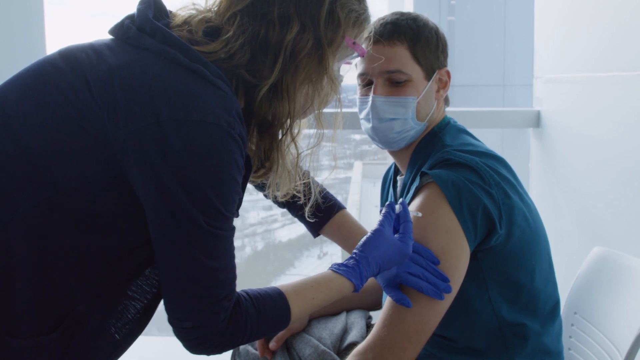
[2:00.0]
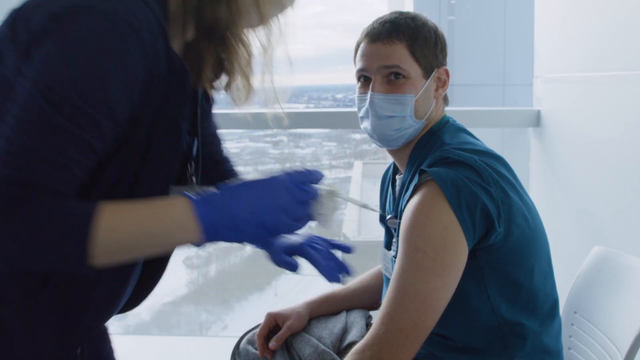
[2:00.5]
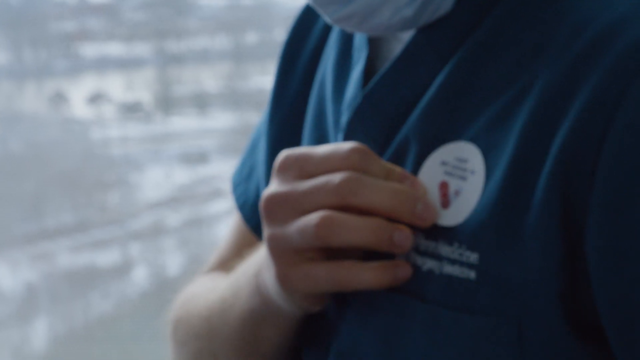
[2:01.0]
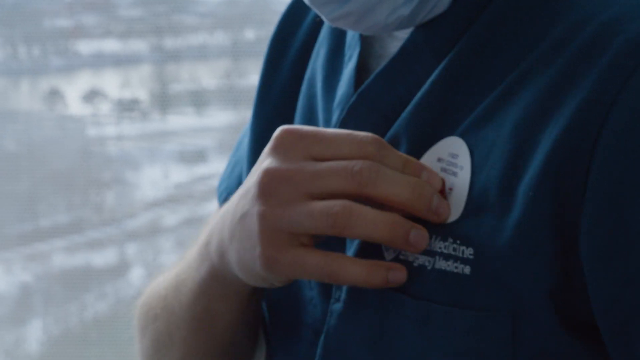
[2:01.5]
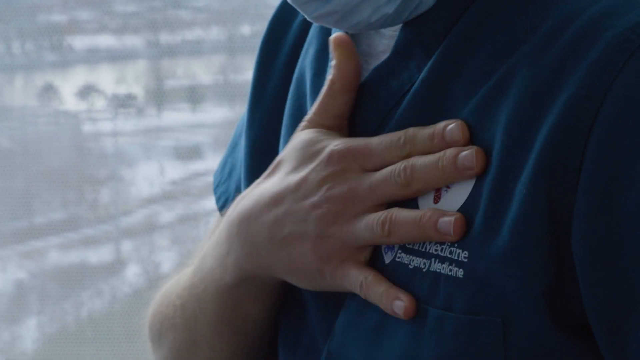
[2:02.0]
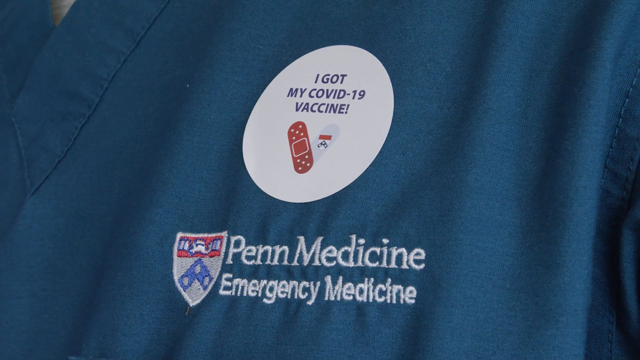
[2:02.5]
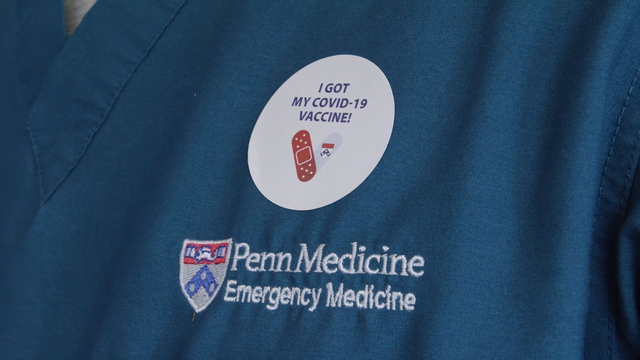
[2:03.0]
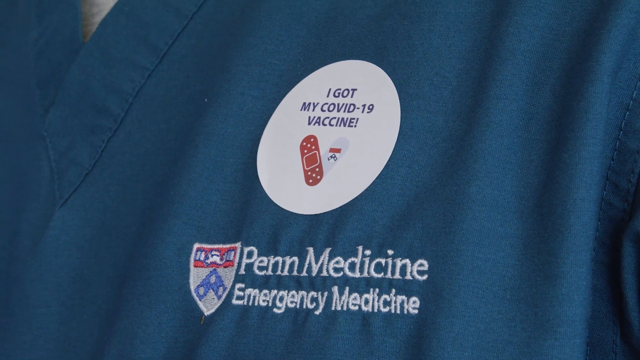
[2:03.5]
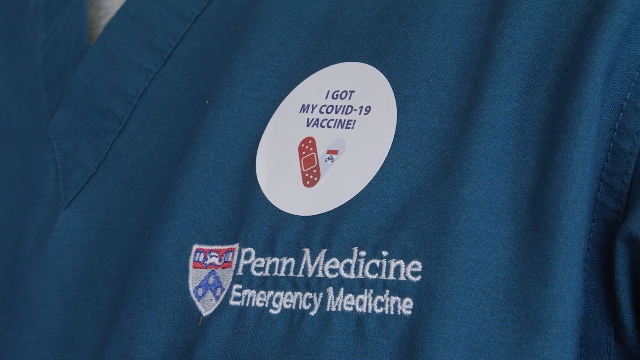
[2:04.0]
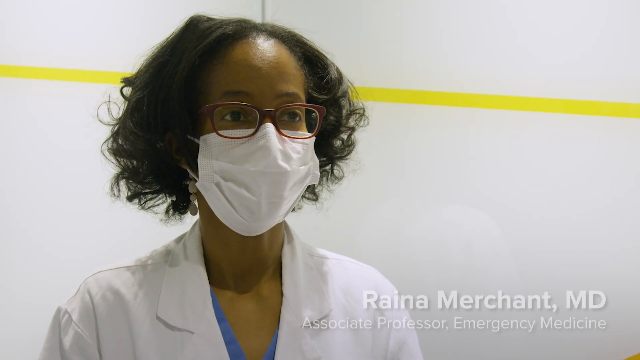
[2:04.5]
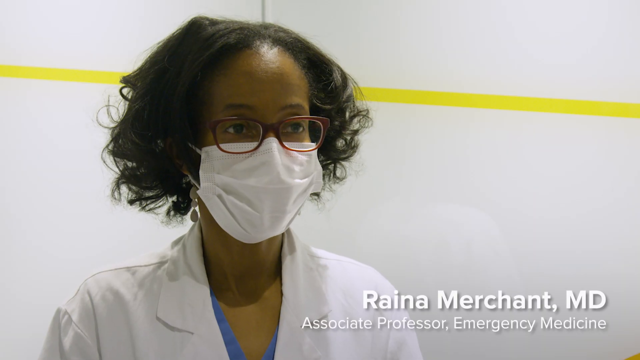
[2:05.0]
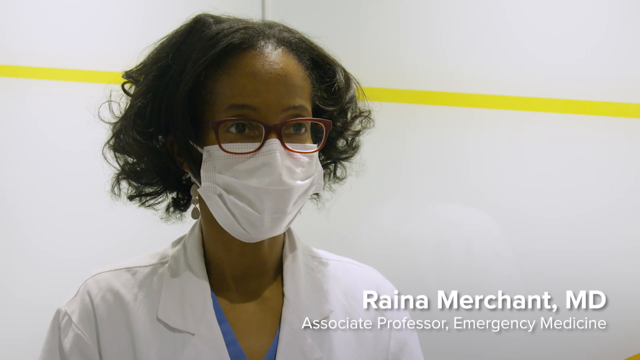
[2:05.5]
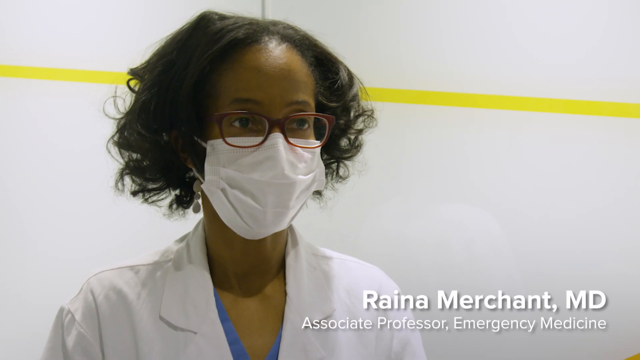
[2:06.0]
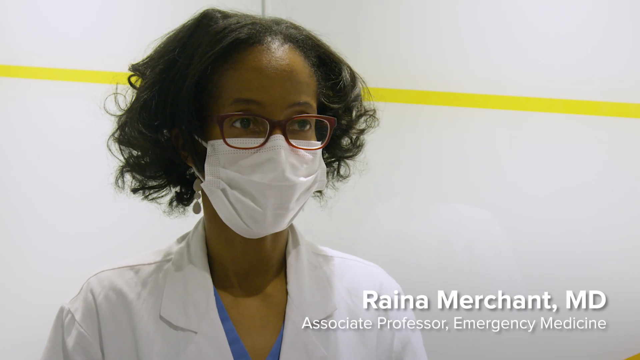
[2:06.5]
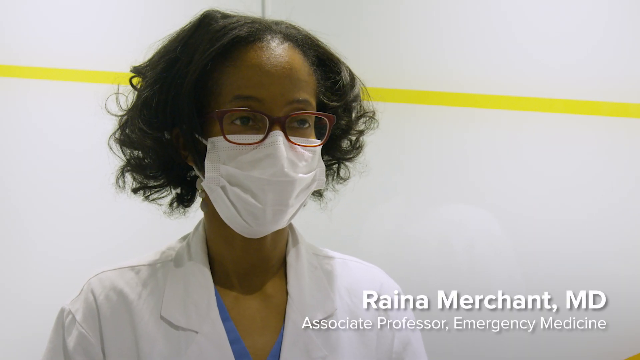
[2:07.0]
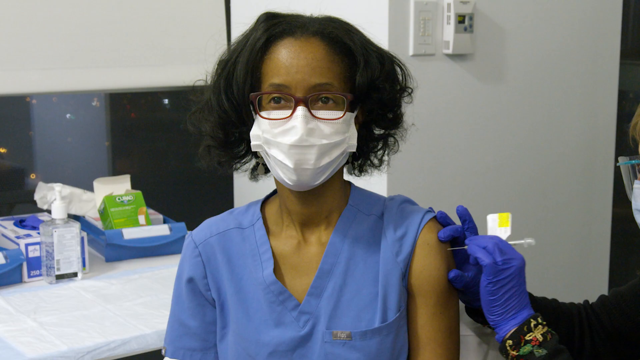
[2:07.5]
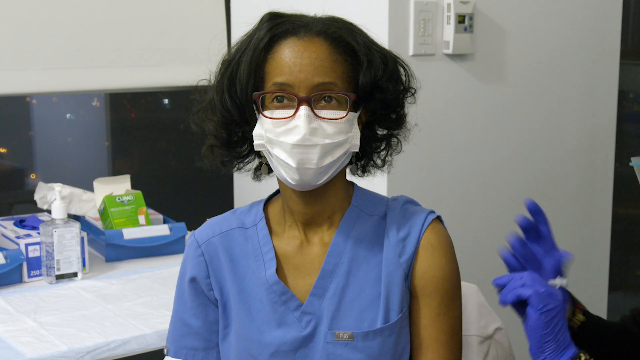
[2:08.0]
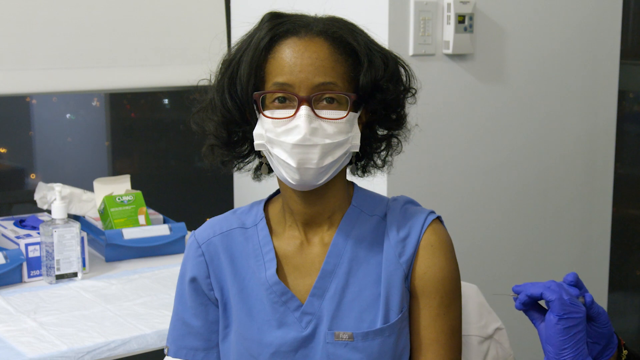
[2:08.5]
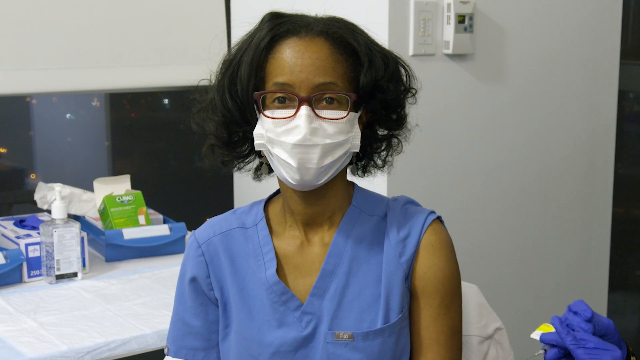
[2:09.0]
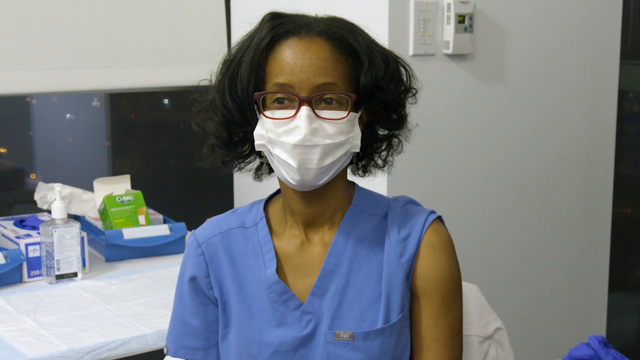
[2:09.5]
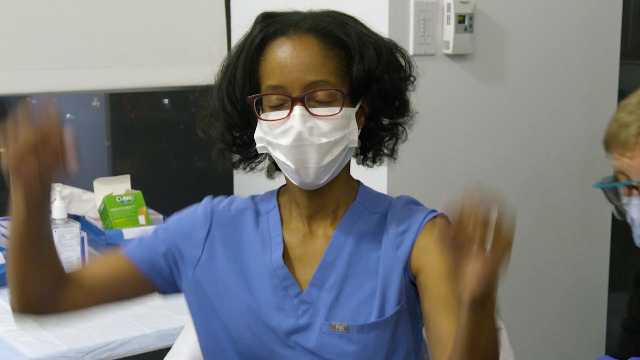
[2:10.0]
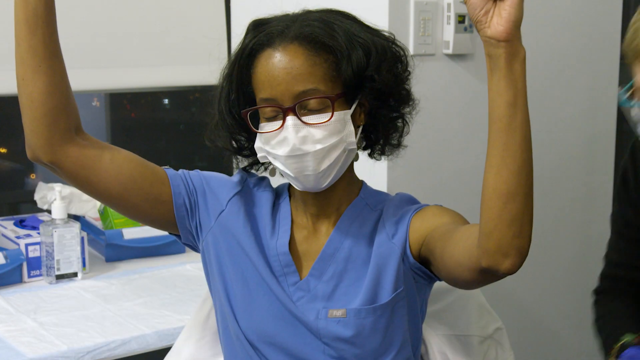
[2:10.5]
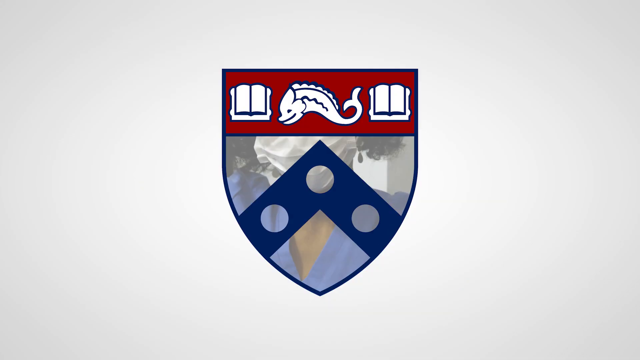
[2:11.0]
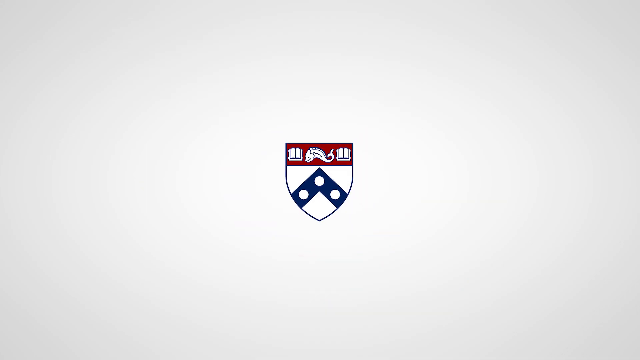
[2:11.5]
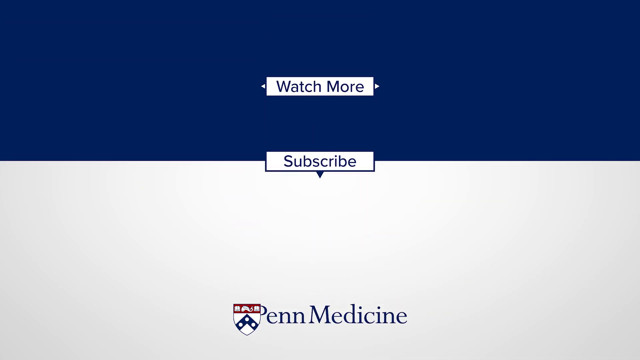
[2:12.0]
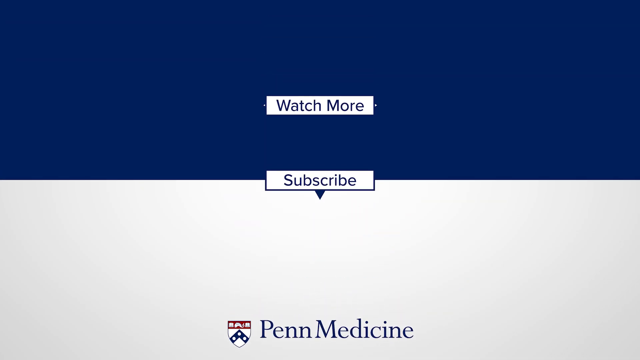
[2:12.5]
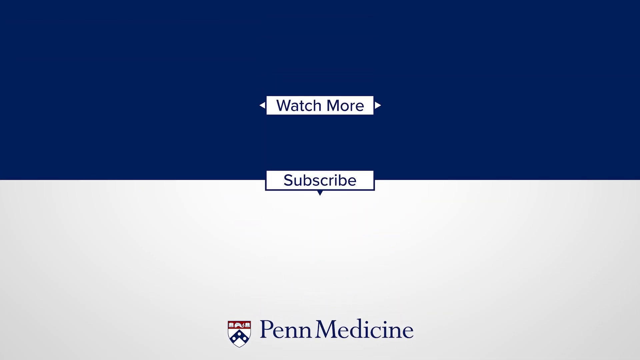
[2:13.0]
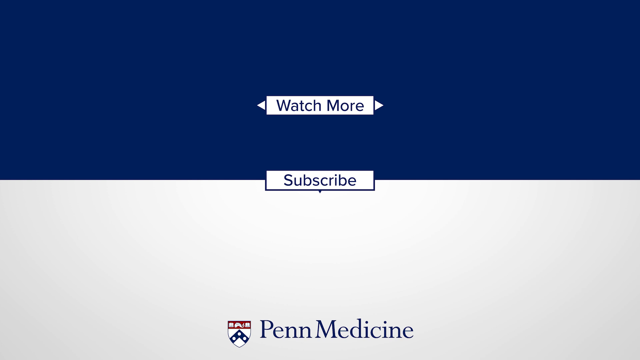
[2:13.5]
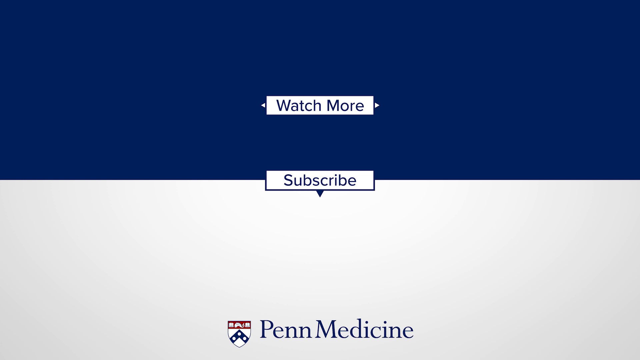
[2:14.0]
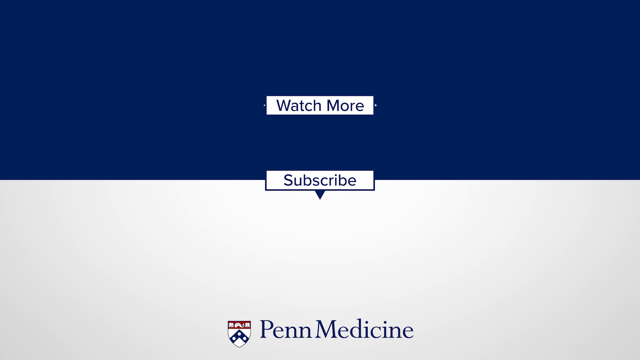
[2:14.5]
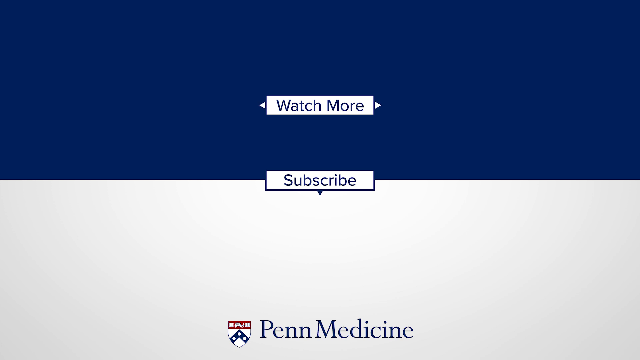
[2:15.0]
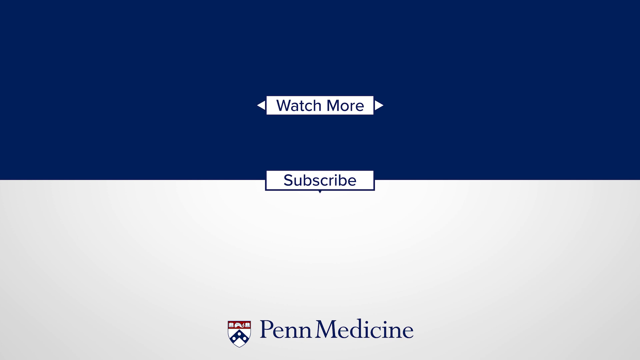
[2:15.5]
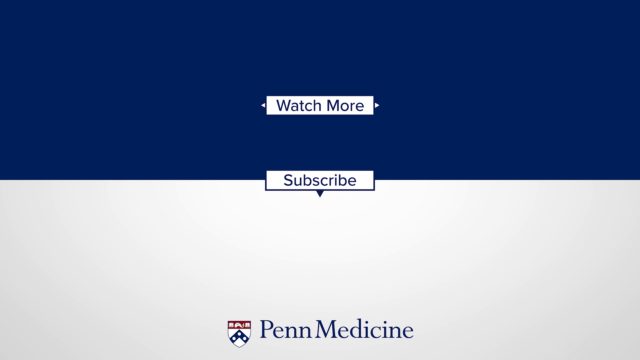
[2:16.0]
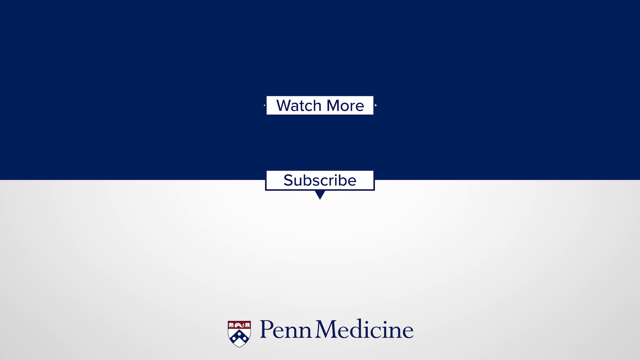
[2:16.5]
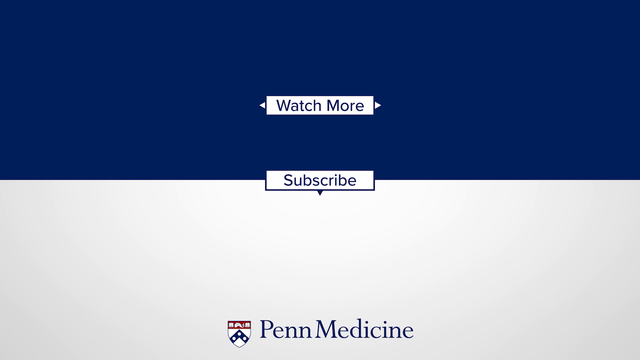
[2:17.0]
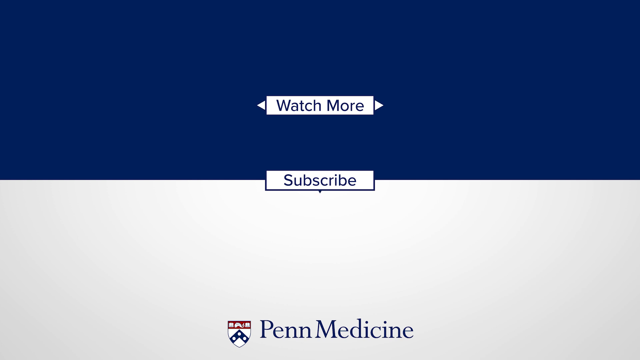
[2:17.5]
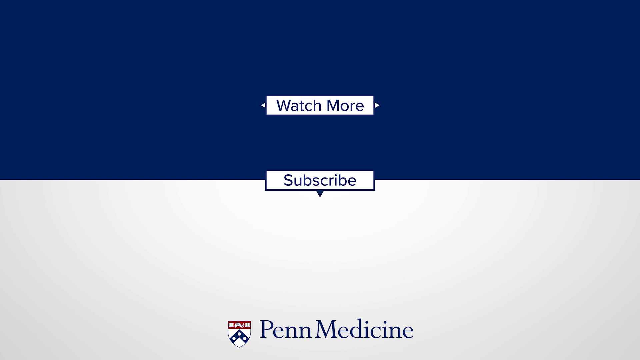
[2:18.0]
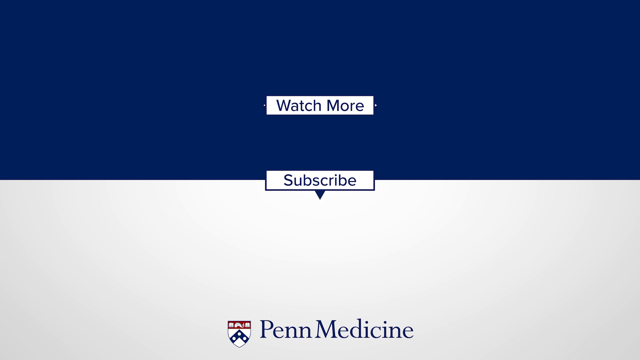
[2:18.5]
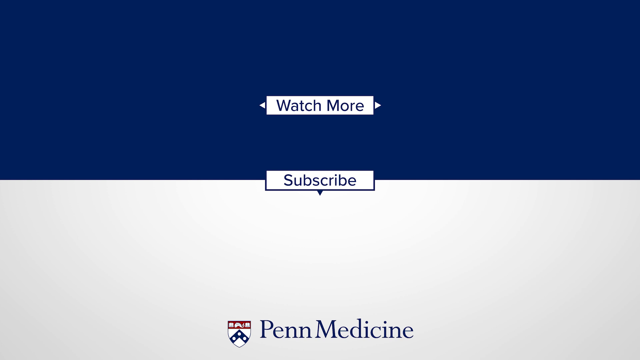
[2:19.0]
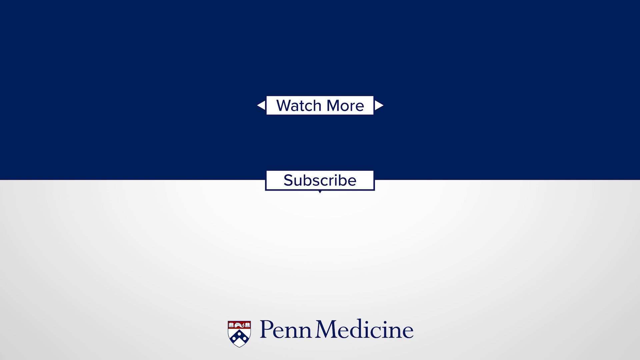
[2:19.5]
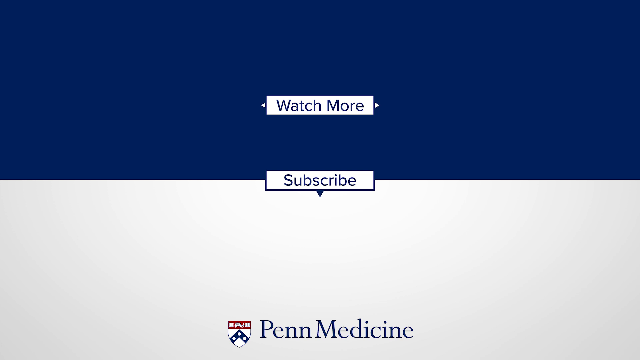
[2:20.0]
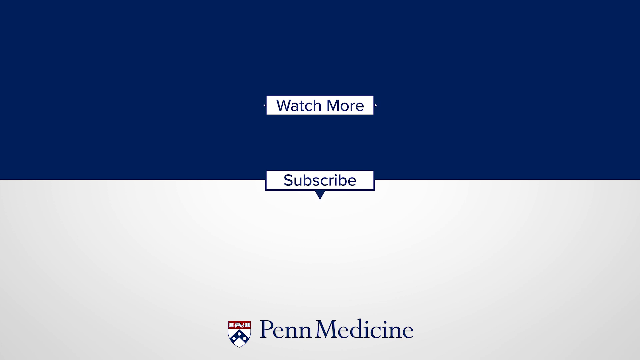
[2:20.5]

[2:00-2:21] Michael Abboud, a member of staff at the hospital, now looks much happier and more relaxed. He has been handed a white sticker that says "I've got my COVID-19 vaccine", with a little caricature of a sticking plaster, or bandaid. It is stuck on his uniform just above an embroidery reading "Penn Medicine, emergency medicine". His uniform is blue and almost like scrubs. The video cuts to Raina Merchant, MD, being asked questions. She is a black woman, perhaps in her mid-30s, in front of a minimalist background of a white wall with a very thin yellow line across it. She wears a white therapeutic uniform, a white mask and red glasses. She is about to have her vaccination. The injection is not shown, but she raises her hands in celebration after receiving the vaccine. The video ends with a cut to "watch more, subscribe" and Penn Medicine.